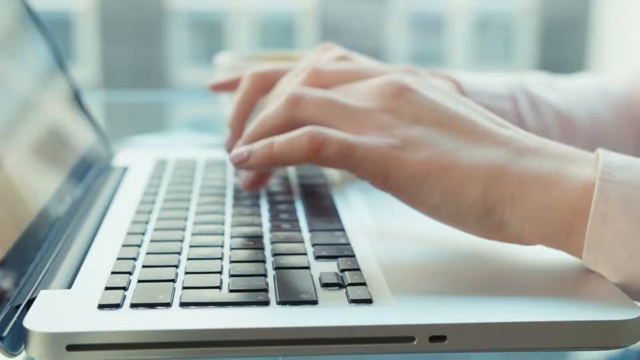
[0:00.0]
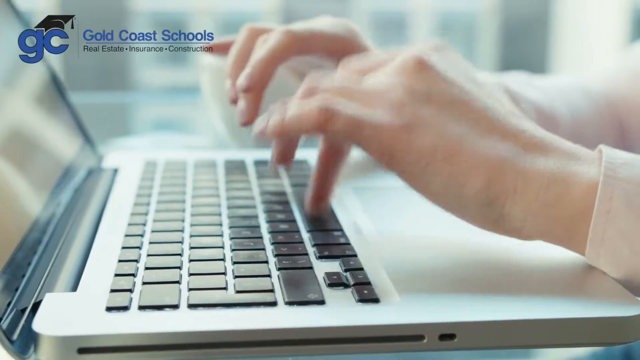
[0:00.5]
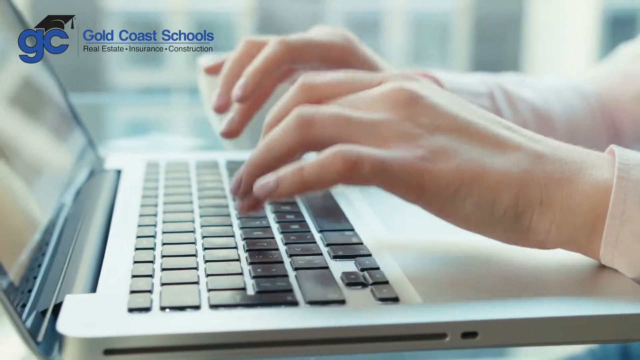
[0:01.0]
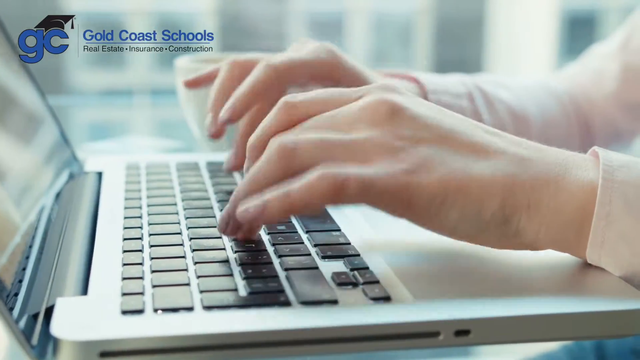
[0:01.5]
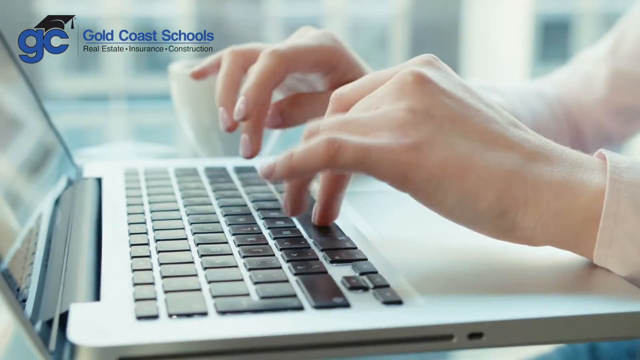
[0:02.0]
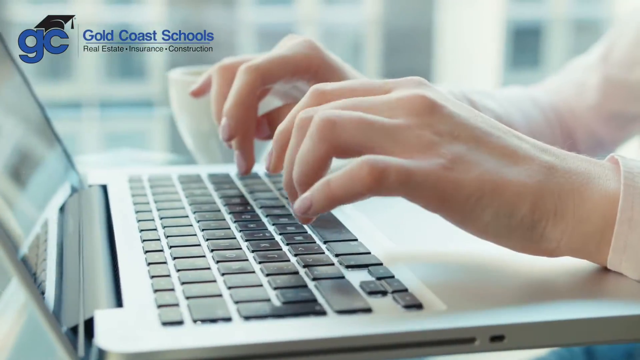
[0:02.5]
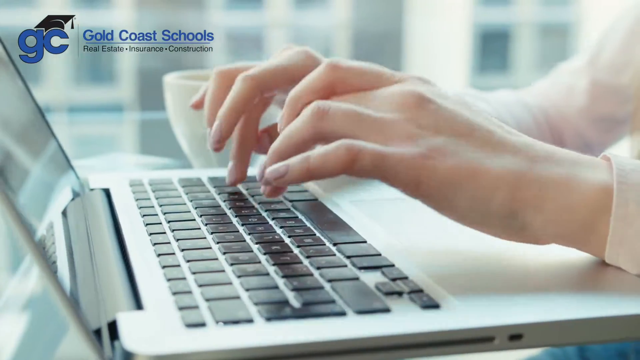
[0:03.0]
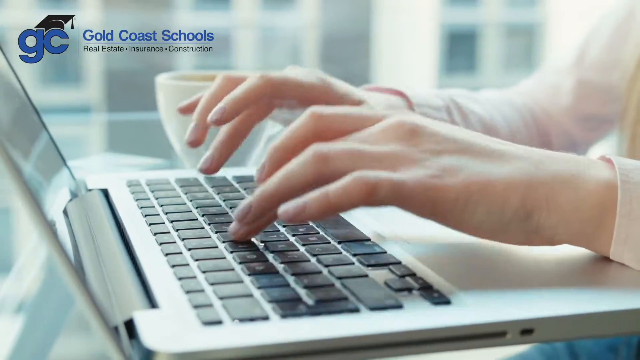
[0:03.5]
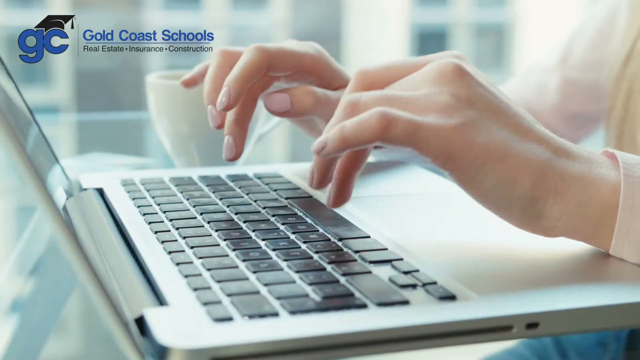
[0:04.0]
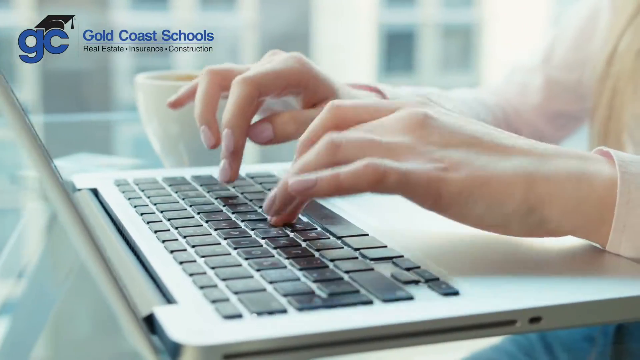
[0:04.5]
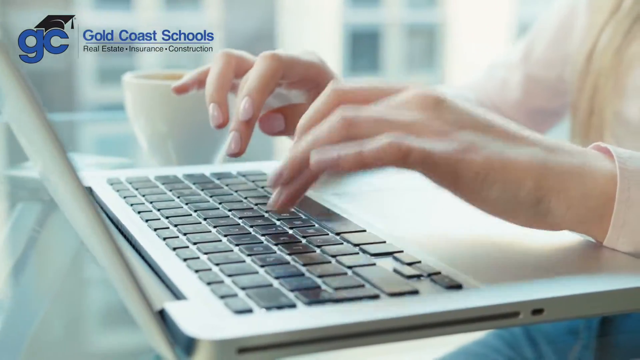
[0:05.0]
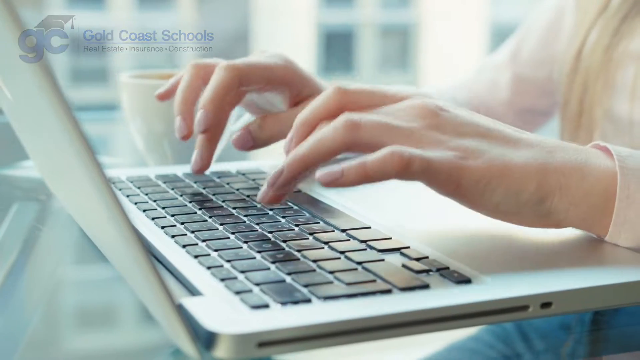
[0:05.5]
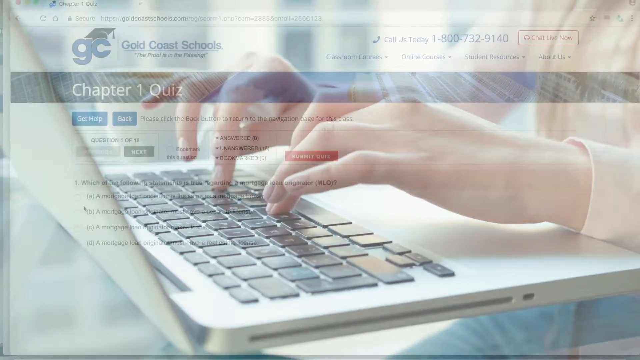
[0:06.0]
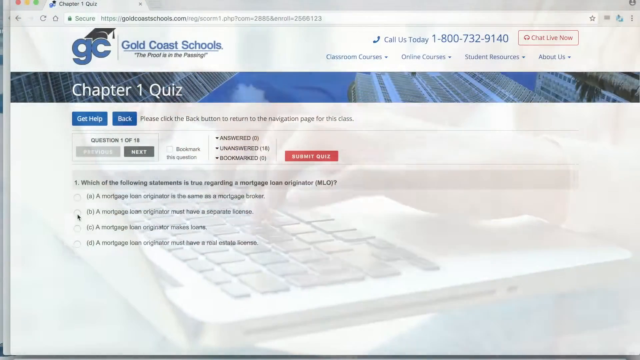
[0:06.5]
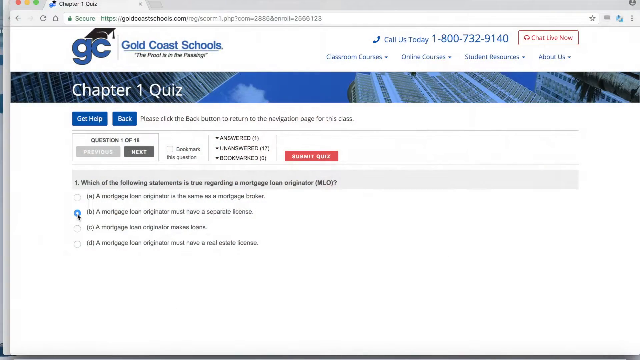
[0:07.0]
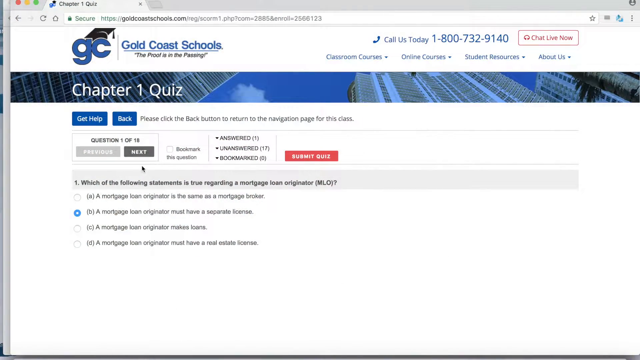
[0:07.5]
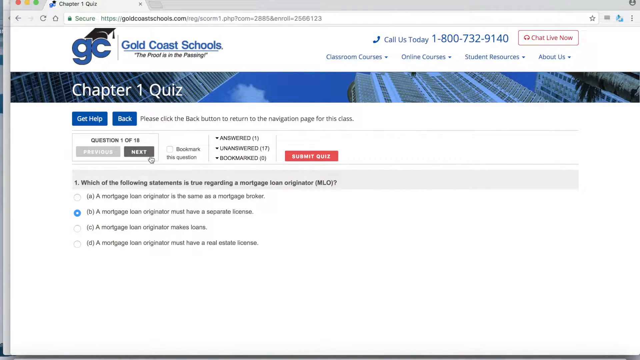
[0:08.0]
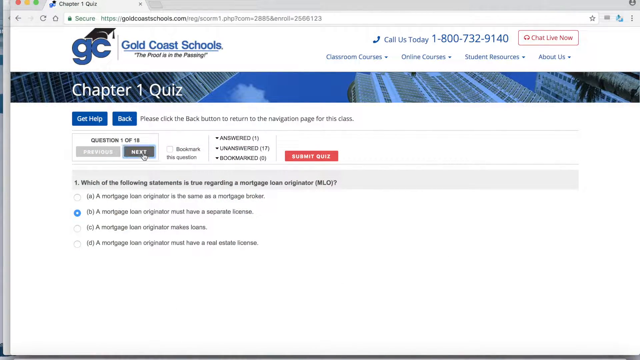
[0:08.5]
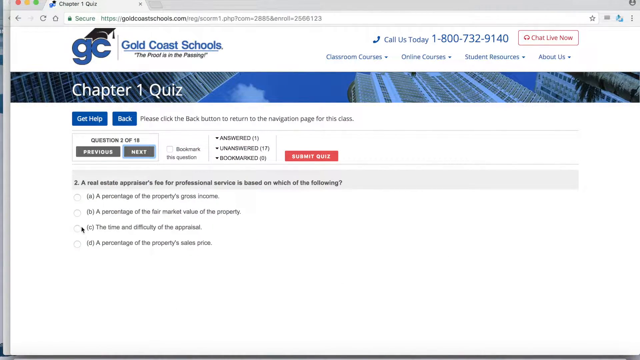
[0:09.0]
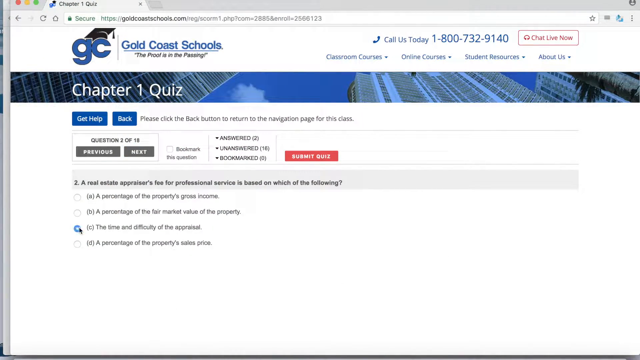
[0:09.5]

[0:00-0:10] A laptop keyboard appears with a woman's hands typing on it. She wears a light pink long-sleeve shirt, and the words "Gold Coast Schools, Real Estate Insurance and Construction" pop up in the upper left-hand corner. The woman keeps typing on the laptop keyboard, with a coffee cup to her right. The view then pans to a new screen showing "Gold Coast Schools Chapter 1 Quiz", where someone appears to be taking the quiz, since the cursor moves around and clicks on various buttons on the monitor's screen.